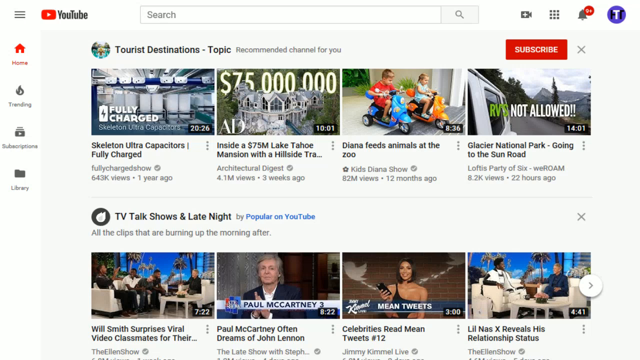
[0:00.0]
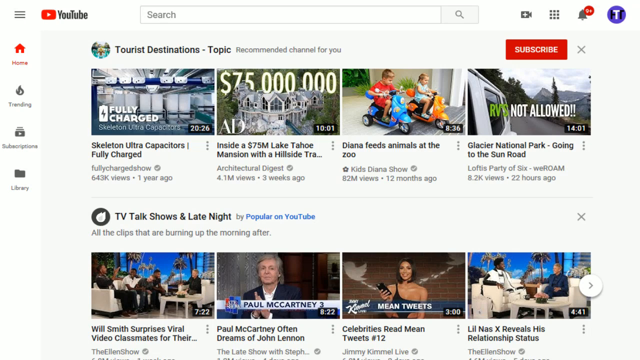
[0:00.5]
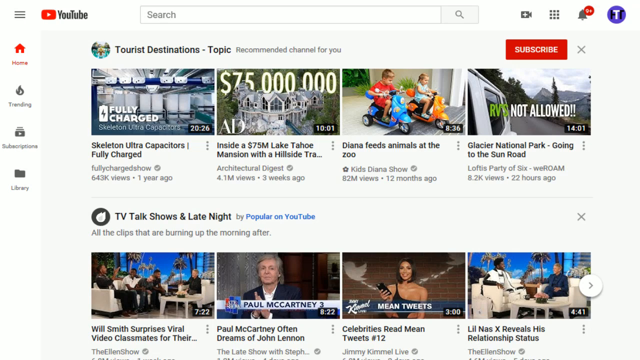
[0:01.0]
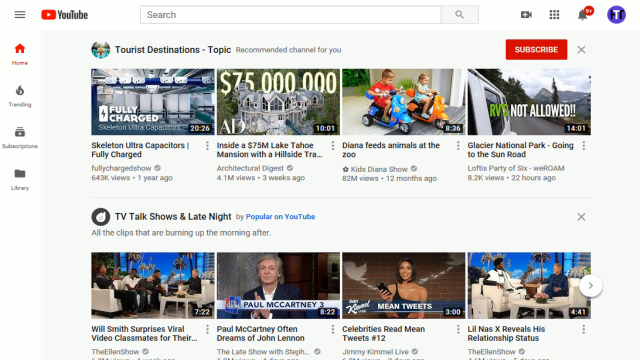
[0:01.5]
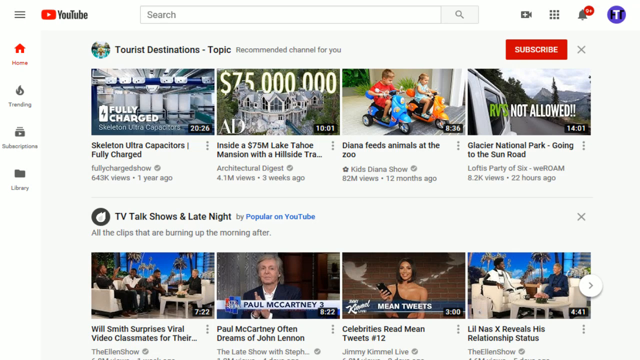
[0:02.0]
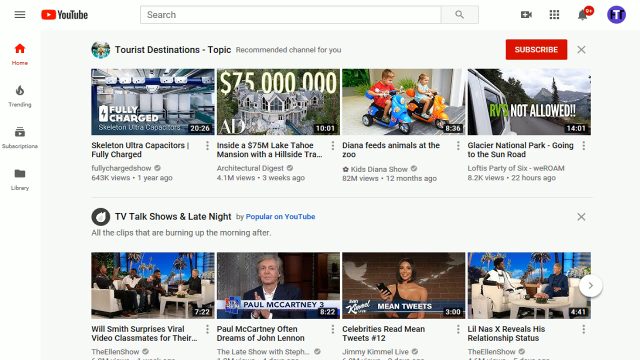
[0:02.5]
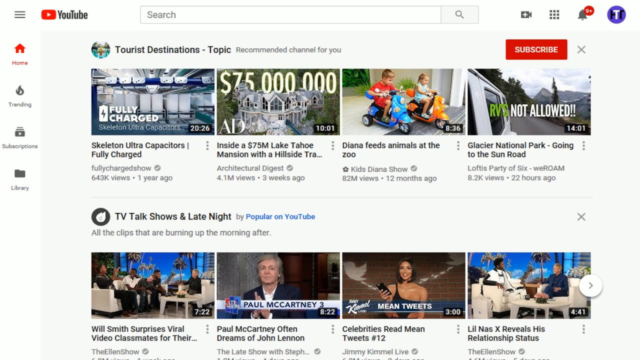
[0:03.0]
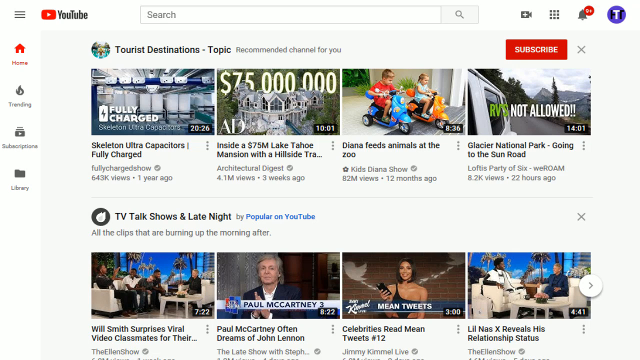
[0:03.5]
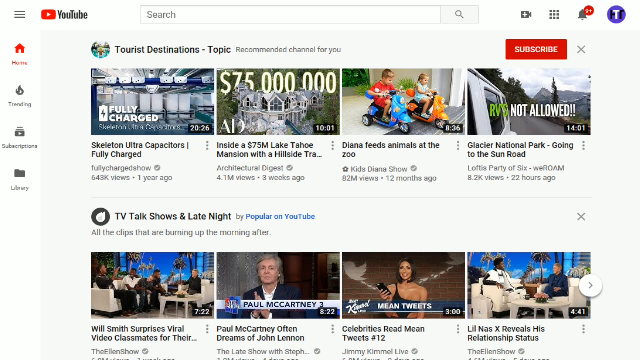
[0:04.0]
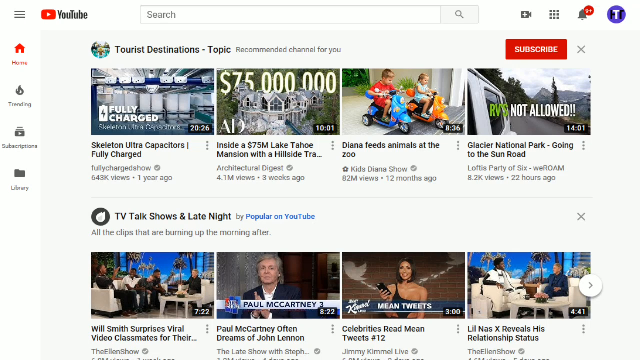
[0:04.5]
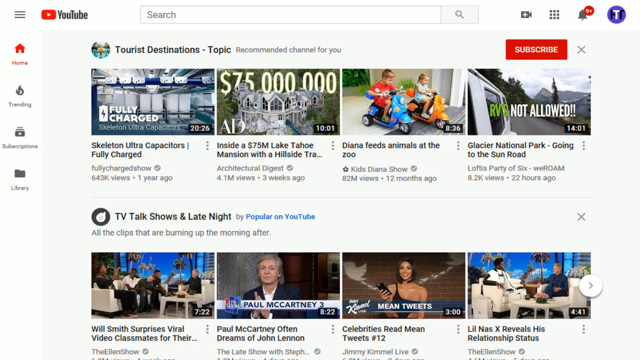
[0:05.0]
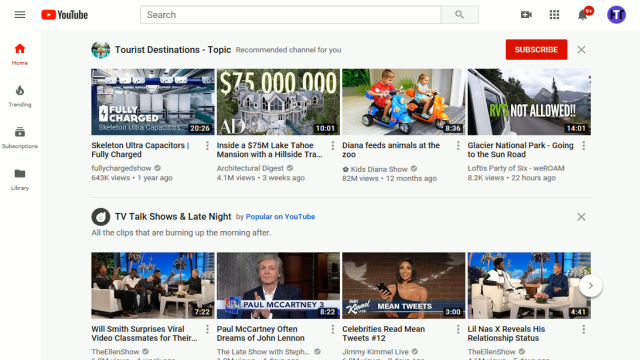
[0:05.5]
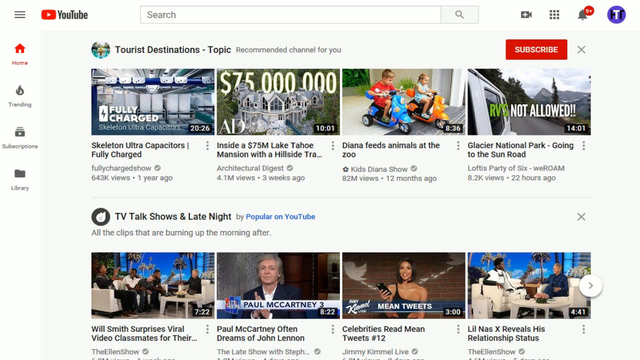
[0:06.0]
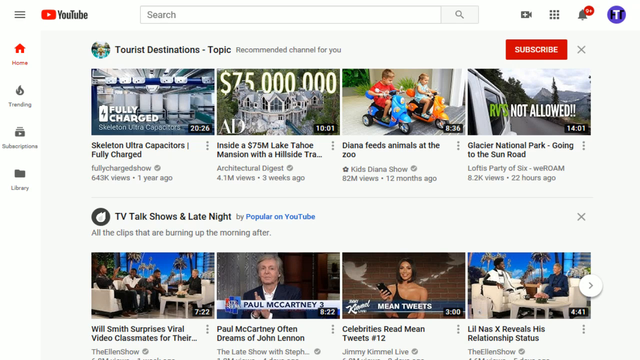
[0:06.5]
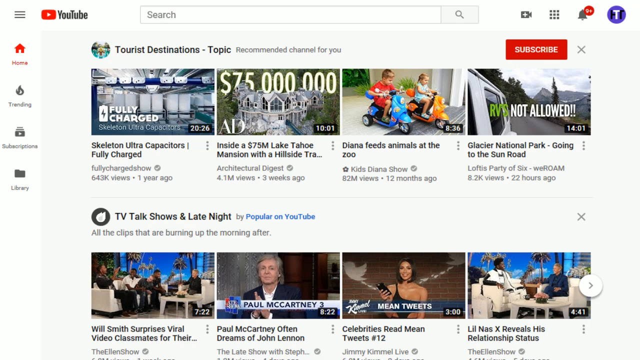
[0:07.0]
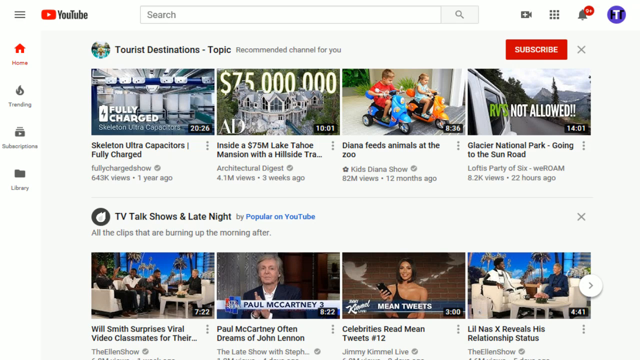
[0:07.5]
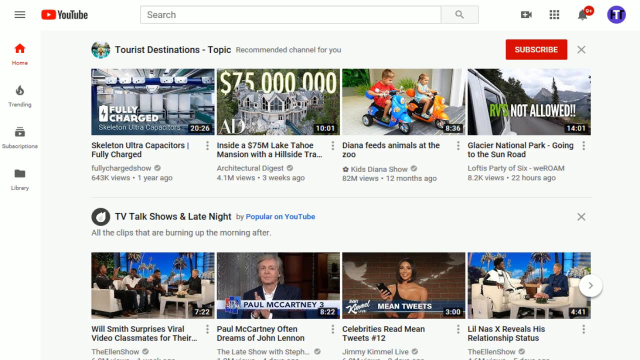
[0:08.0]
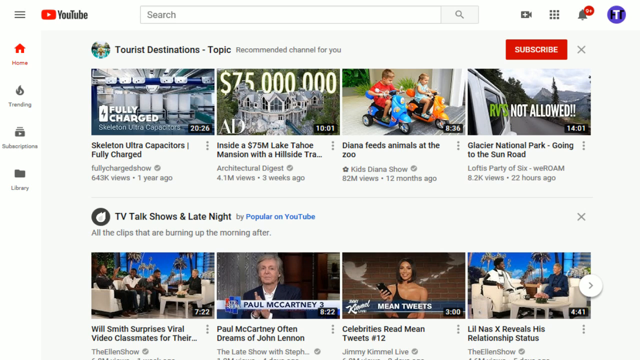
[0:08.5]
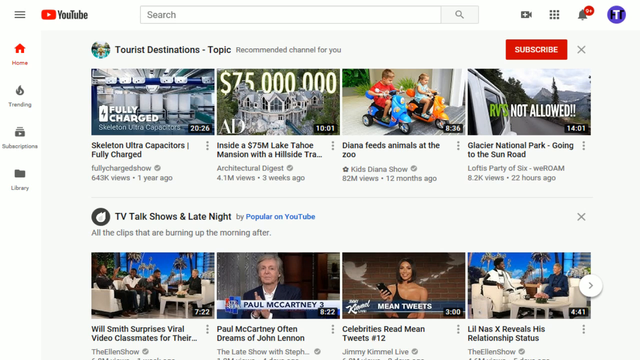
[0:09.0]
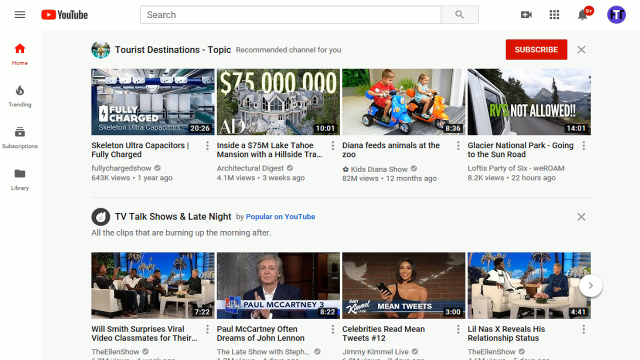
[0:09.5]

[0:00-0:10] The video opens on a YouTube homepage that looks somewhat like a screen recording, displaying videos from a few different channels, including tourist destination topics, with a subscribe button next to a channel. Among the videos are one about a 75 million dollar Lake Tahoe mansion, one titled "Diana feeds animals", and "Glacier National Park going to the Sun Road". The logged-in channel's logo, which starts with a T, is in the top right, and 21 notifications are visible on the page. No people or animals appear; the setting is just the YouTube homepage.